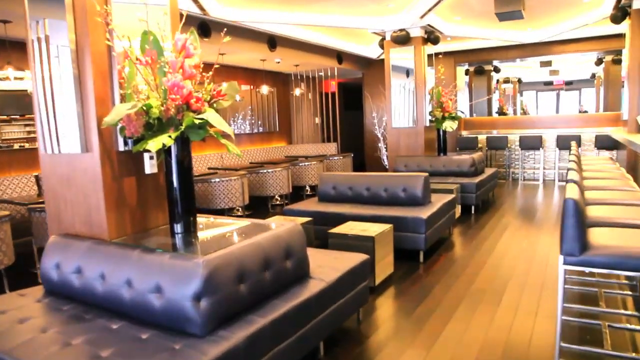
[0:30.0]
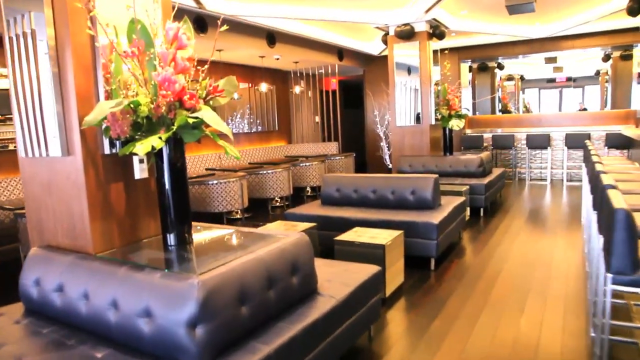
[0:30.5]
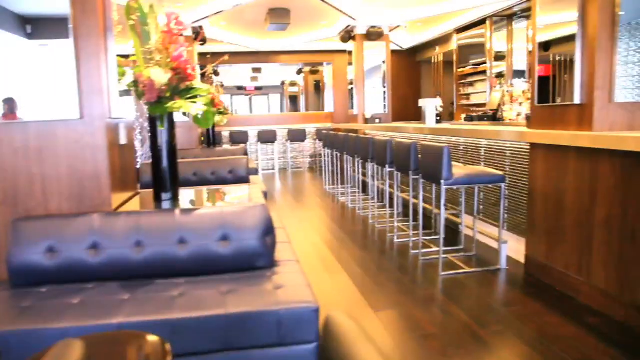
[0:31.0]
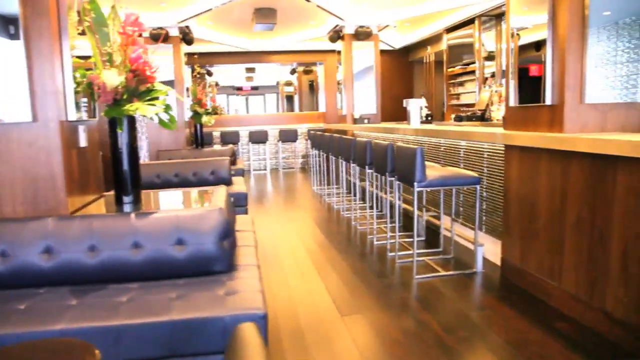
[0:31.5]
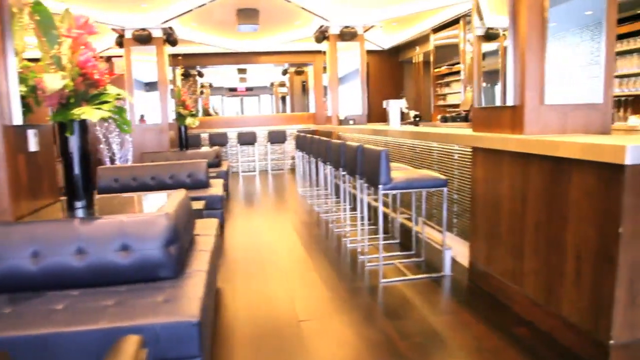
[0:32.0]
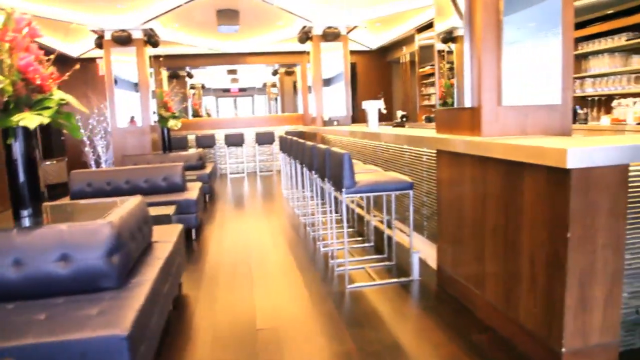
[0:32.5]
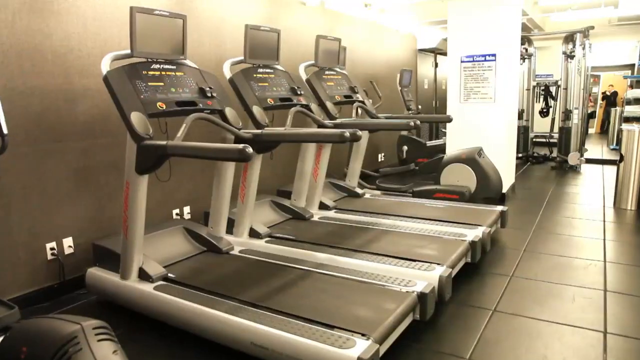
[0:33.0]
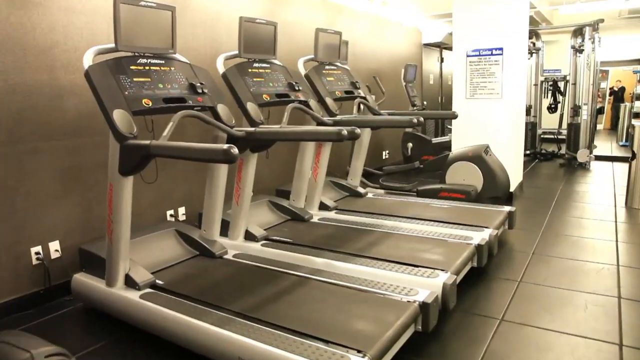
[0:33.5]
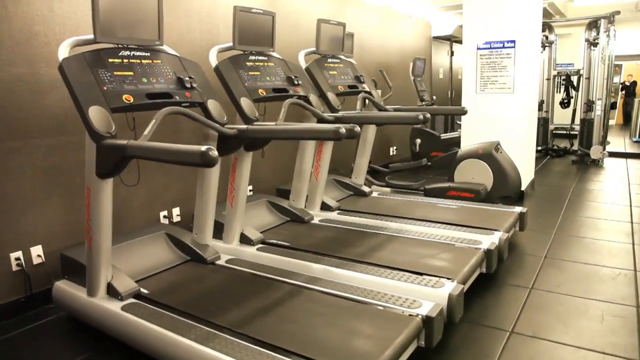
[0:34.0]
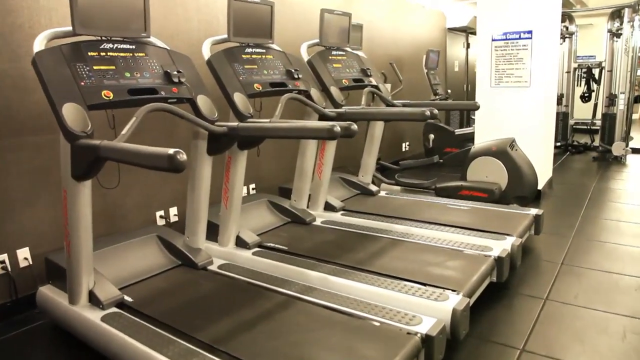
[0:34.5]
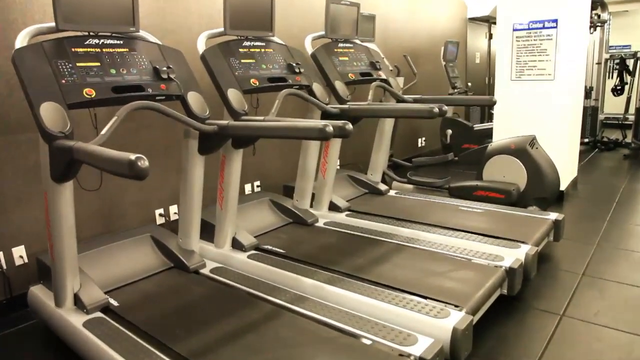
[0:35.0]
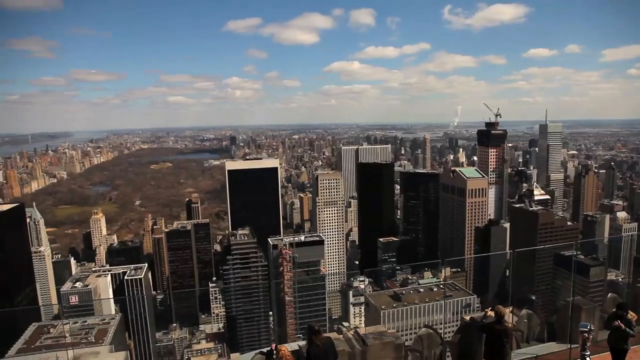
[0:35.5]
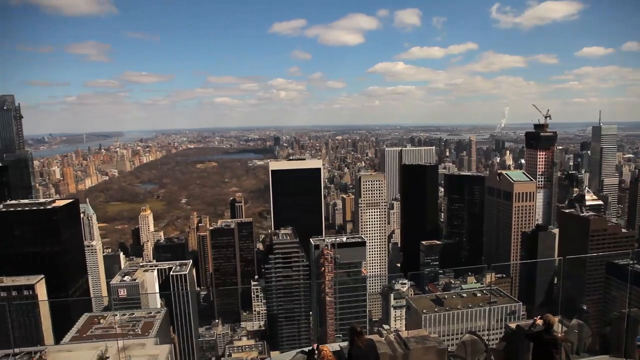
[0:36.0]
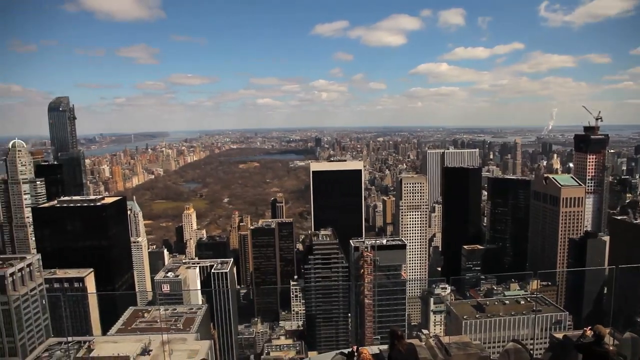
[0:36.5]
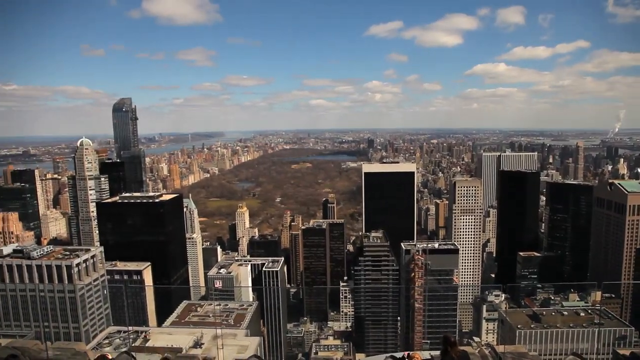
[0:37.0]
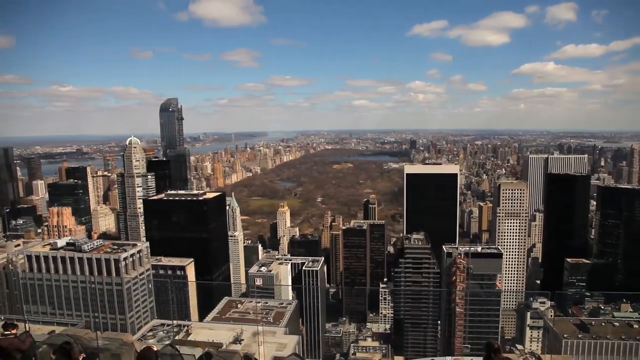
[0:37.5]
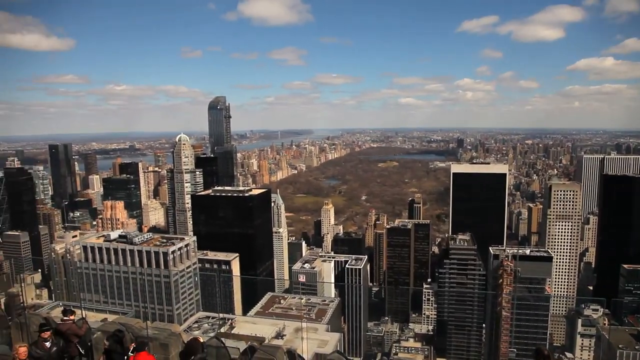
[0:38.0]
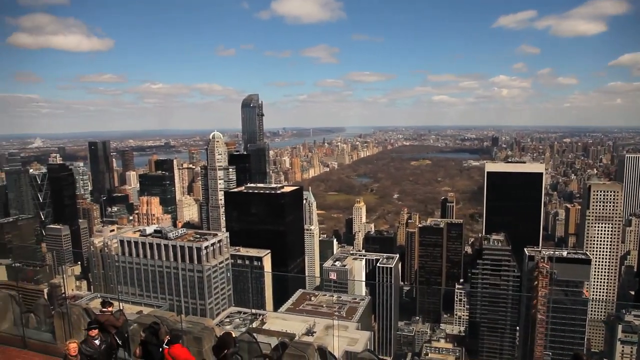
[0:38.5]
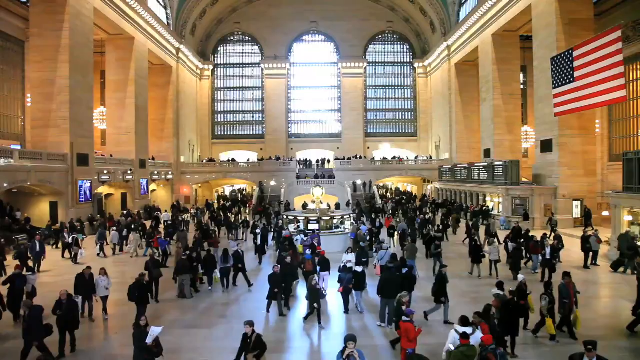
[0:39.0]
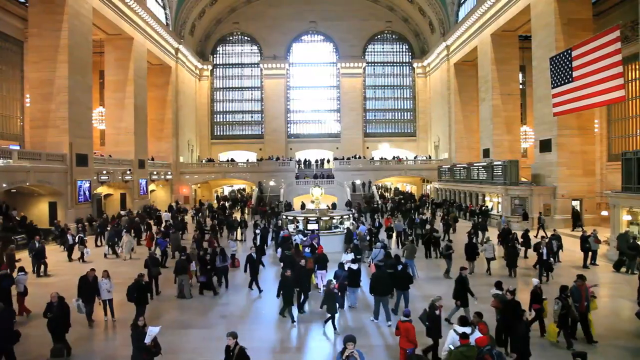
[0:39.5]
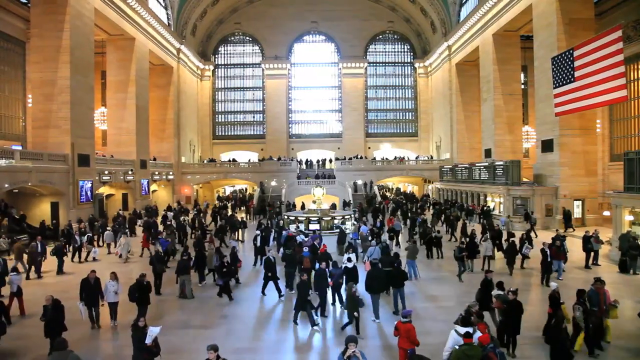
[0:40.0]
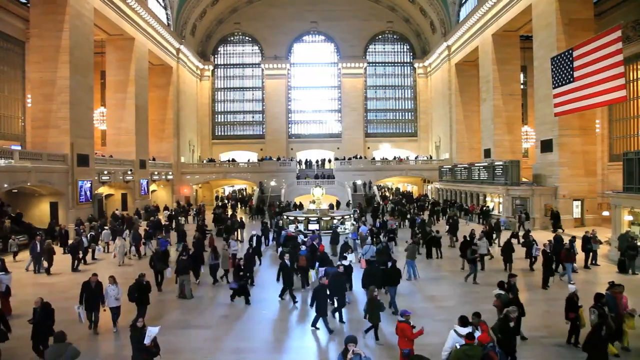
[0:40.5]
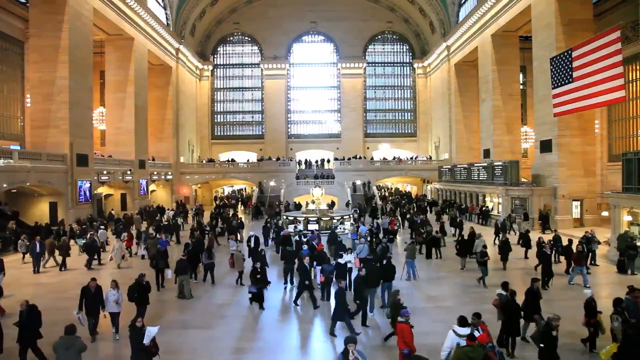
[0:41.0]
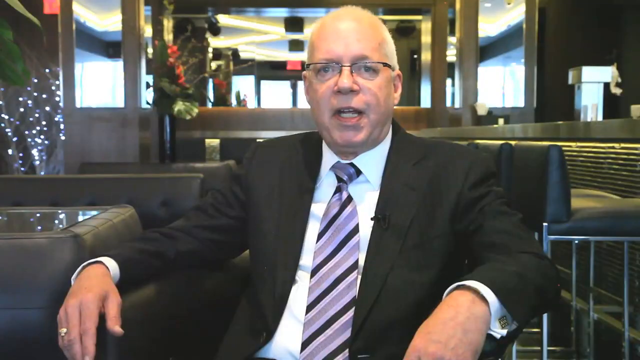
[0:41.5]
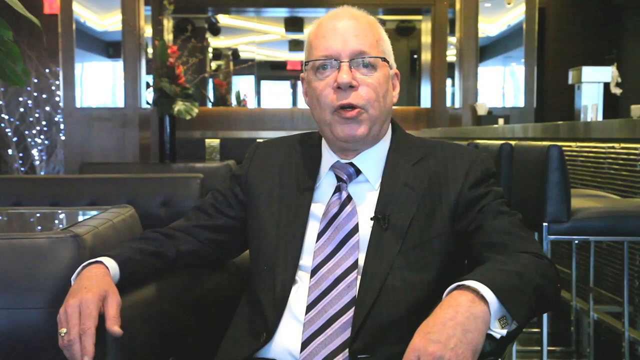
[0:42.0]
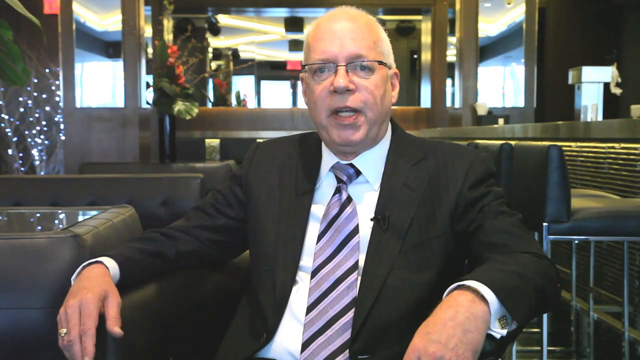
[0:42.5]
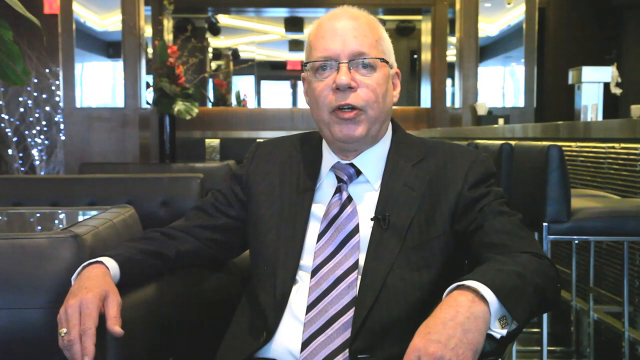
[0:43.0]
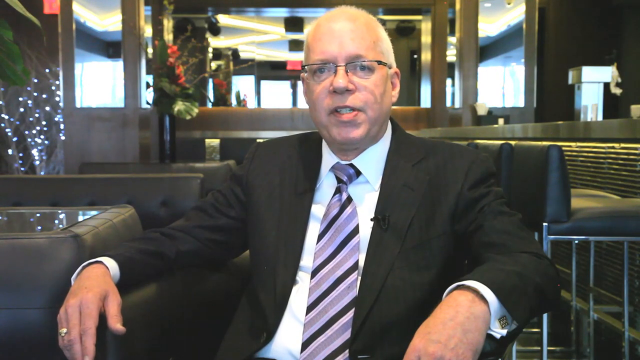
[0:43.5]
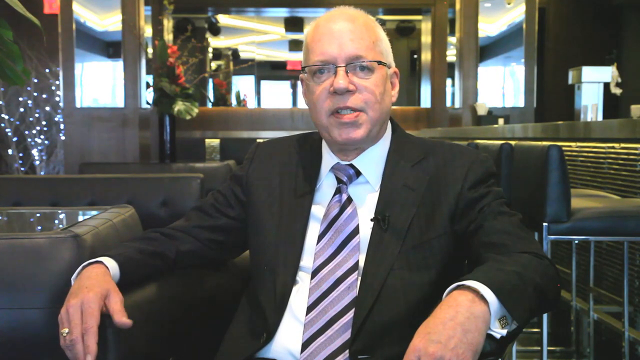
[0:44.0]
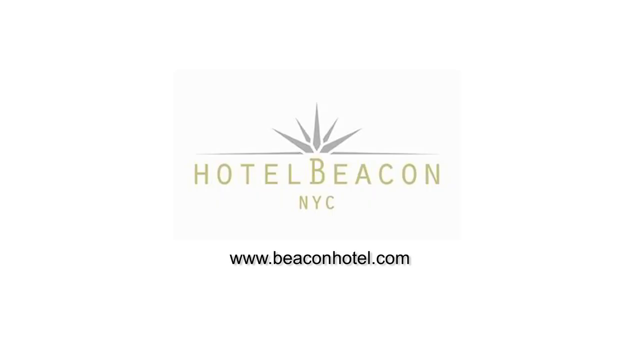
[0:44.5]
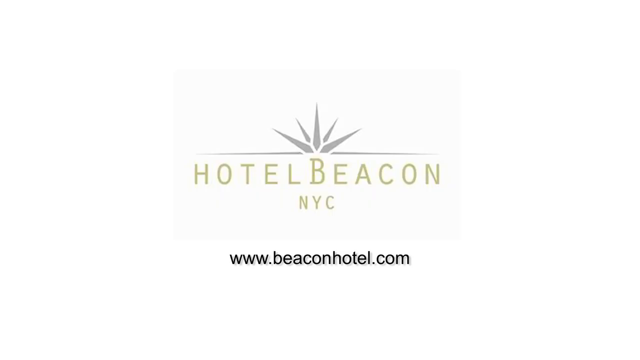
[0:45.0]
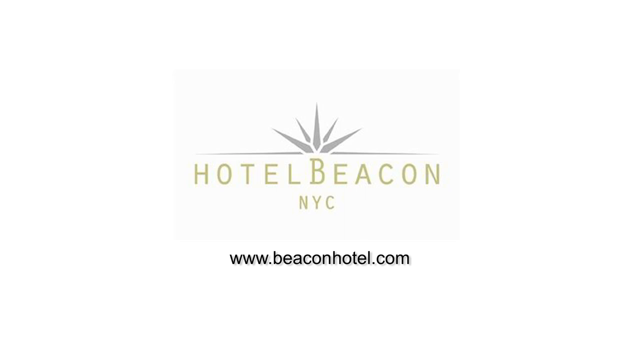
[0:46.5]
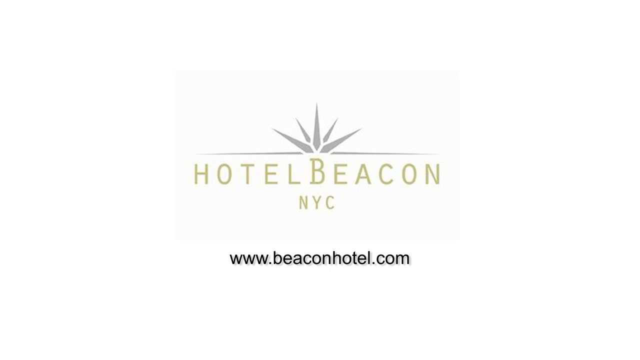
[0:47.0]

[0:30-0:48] The camera pans forward through a luxurious hotel bar with many chairs and tables, as well as a countertop with many chairs arranged in front of it. The camera then pans slowly to the right through the bar. Next, the camera pans forward through a hotel gym with treadmills and weight machines in the background. The view pans left across an overhead view of New York City. Many people walk through Grand Central Station in New York, with an American flag raised on the right side of the building. Thomas Travers sits in a luxurious room, facing the viewer and speaking. A white background shows yellow text reading "Hotel Beacon" and beneath that "NYC," with black text beneath that reading "www.beaconhotel.com."